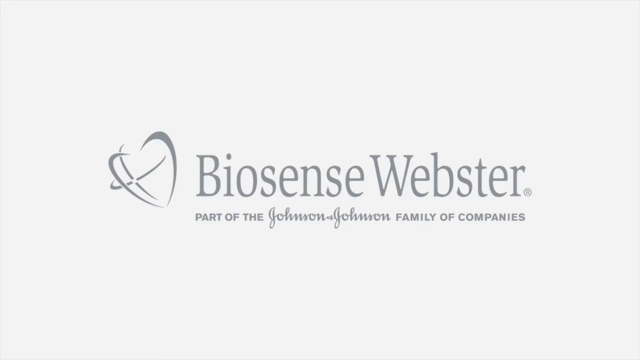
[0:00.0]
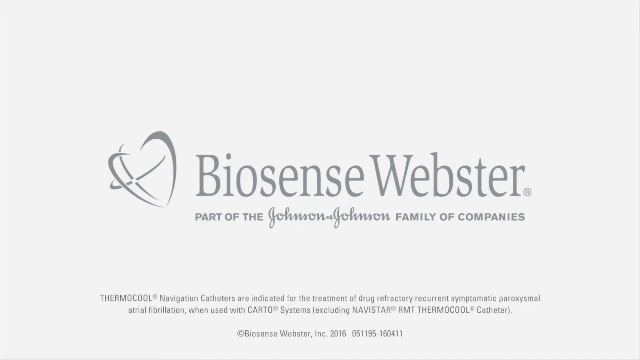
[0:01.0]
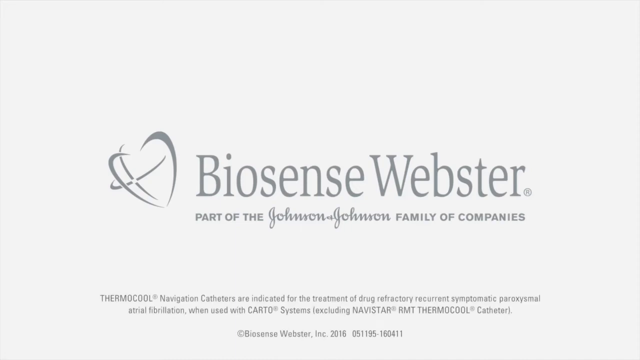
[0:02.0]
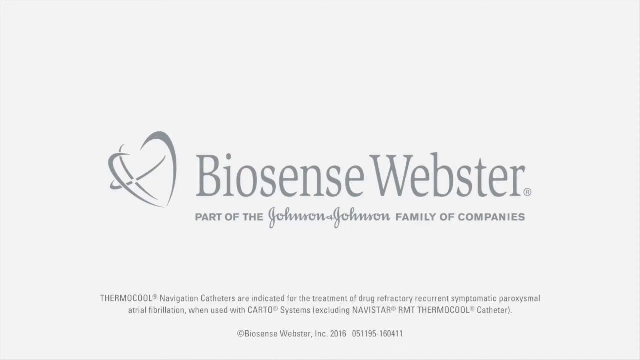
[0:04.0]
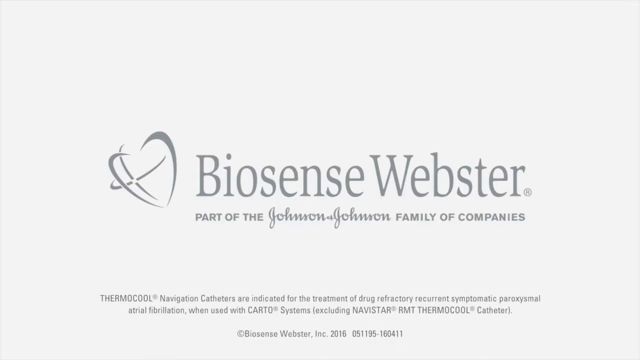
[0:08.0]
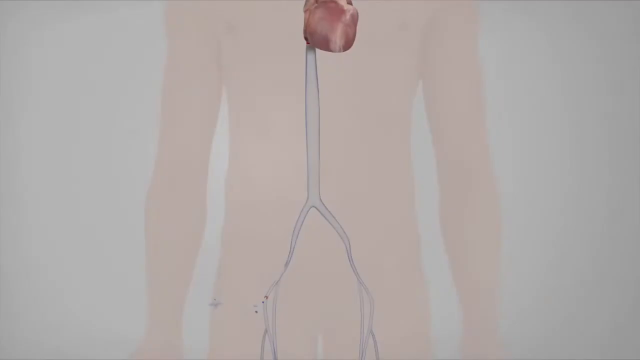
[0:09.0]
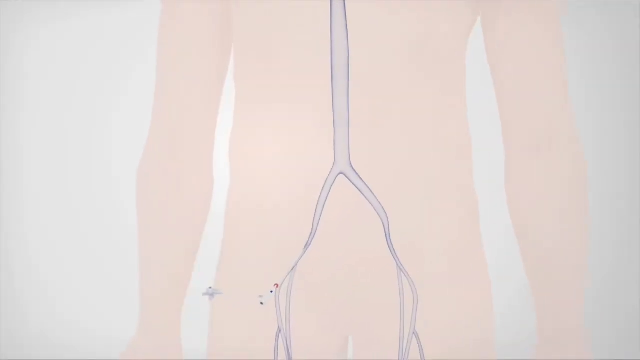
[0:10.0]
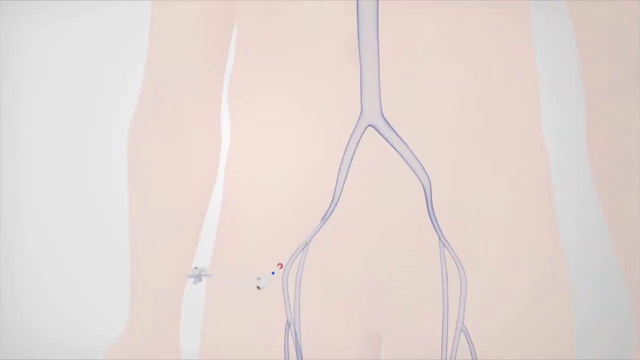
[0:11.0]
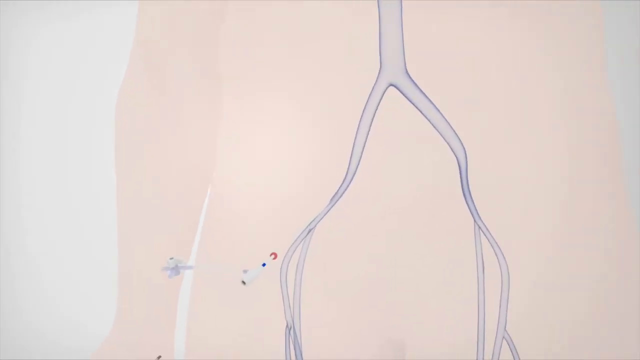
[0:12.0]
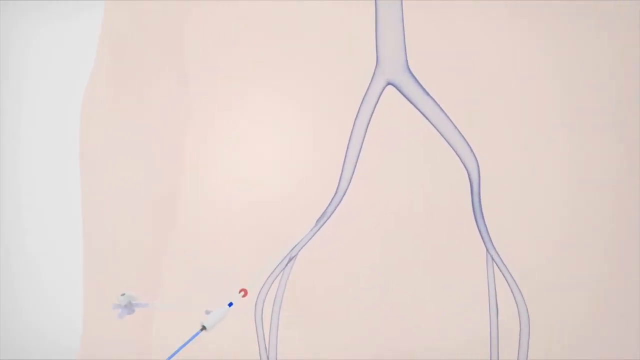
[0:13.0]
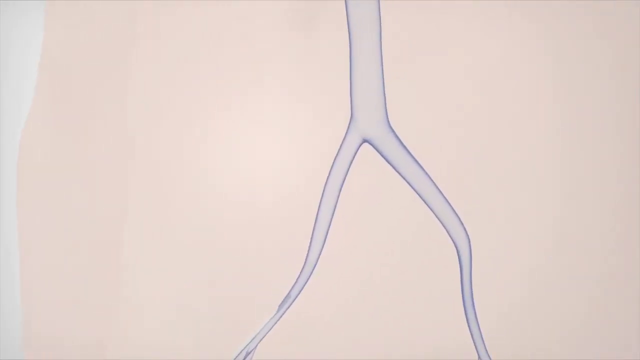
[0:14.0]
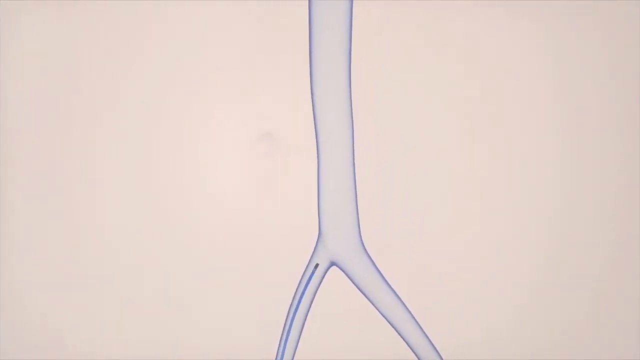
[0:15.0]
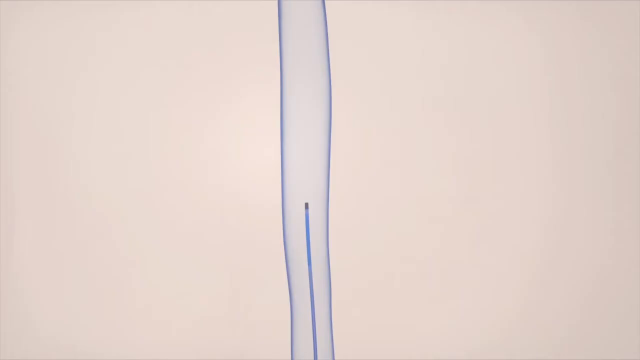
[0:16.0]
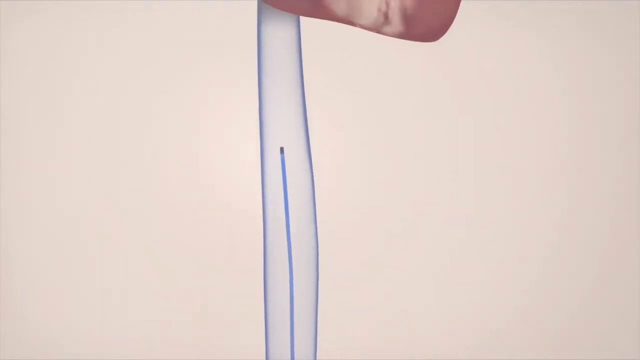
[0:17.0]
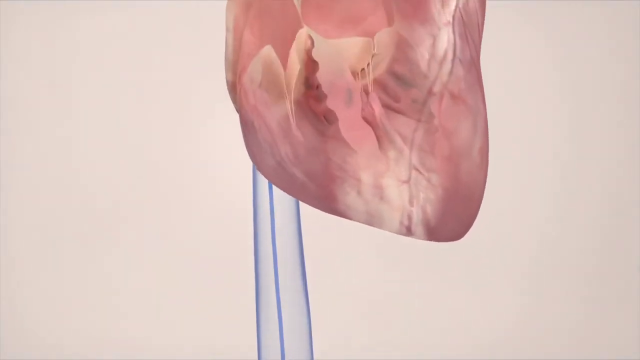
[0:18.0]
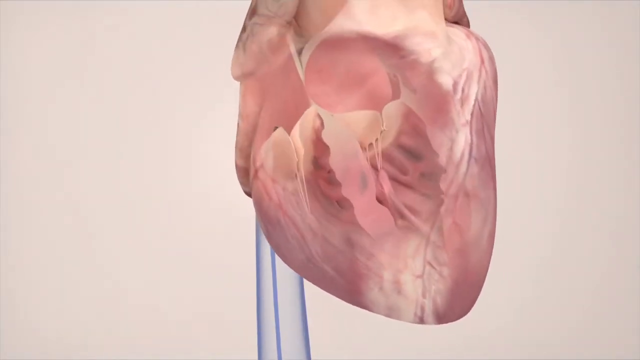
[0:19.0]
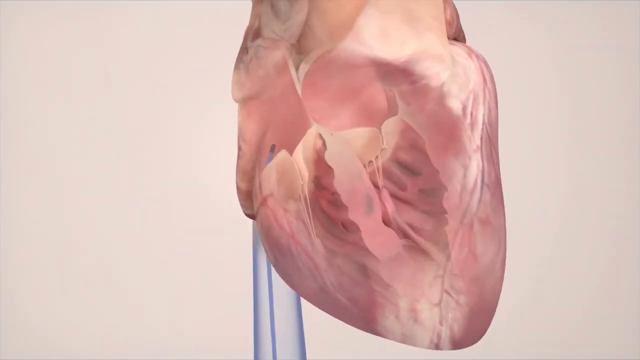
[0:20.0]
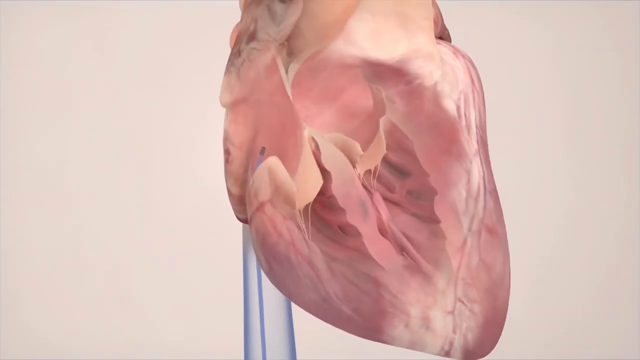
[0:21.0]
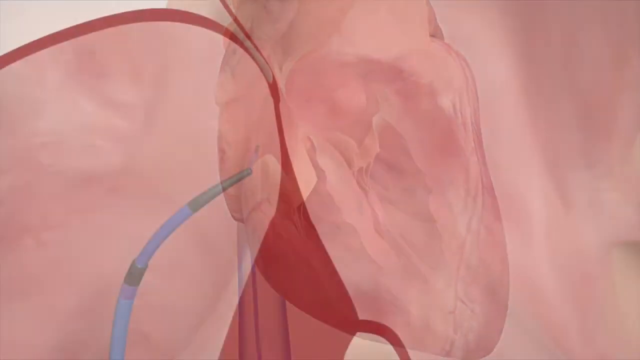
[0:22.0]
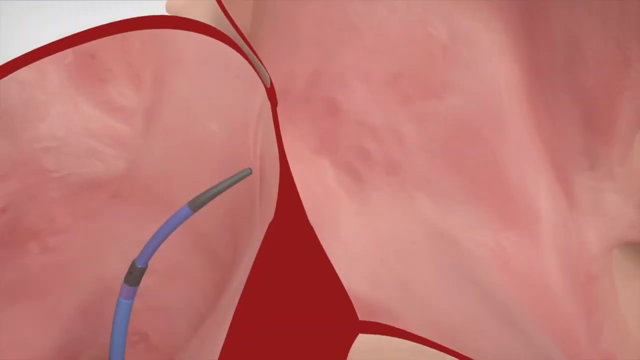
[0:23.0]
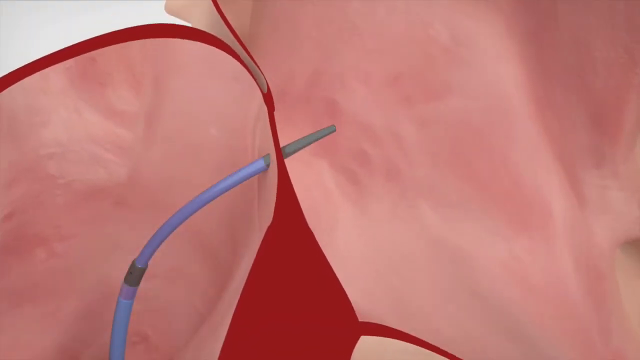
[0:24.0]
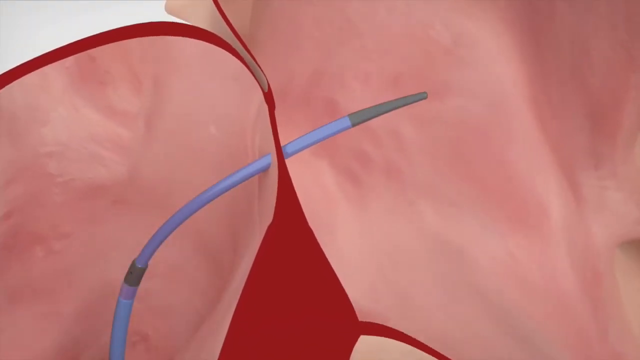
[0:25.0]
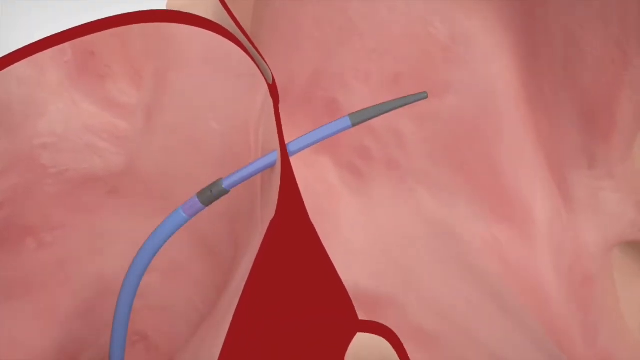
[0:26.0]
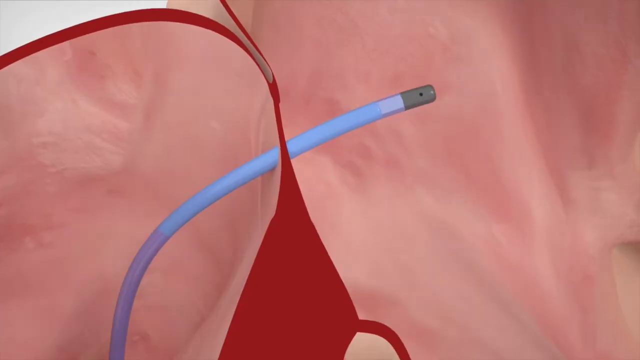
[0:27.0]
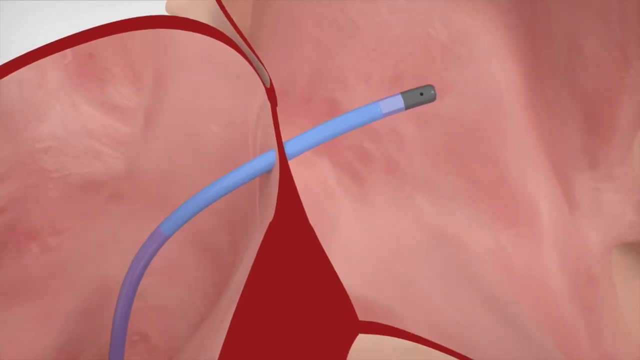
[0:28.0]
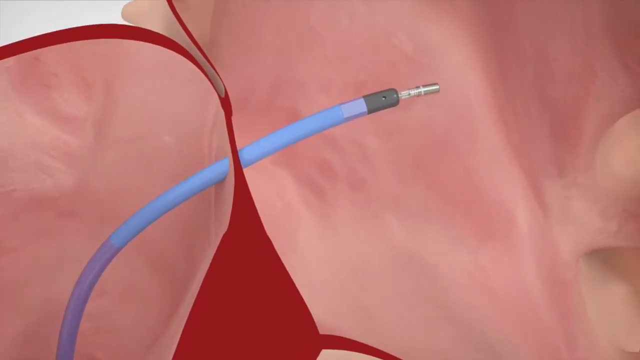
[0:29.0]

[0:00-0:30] The video shows the name Biosense Webster as part of a family of companies. There is small text at the bottom of the screen that is very hard to read. A human body is shown along with its nervous system, seemingly the central nervous system. Something is entered into the nerve, and it seems to be an operation of heart blocking or something similar.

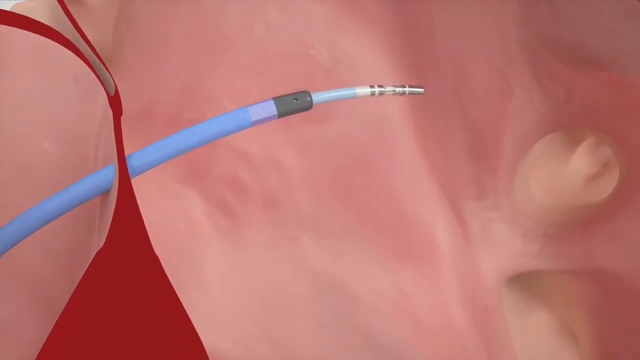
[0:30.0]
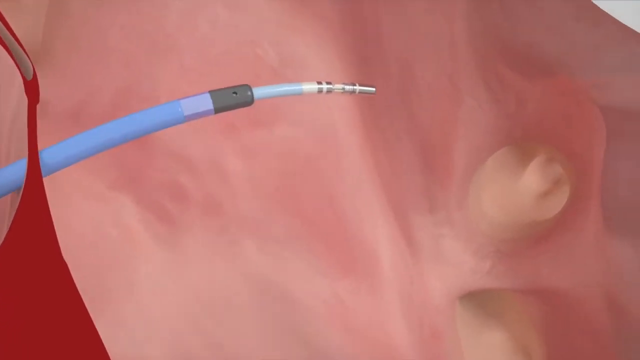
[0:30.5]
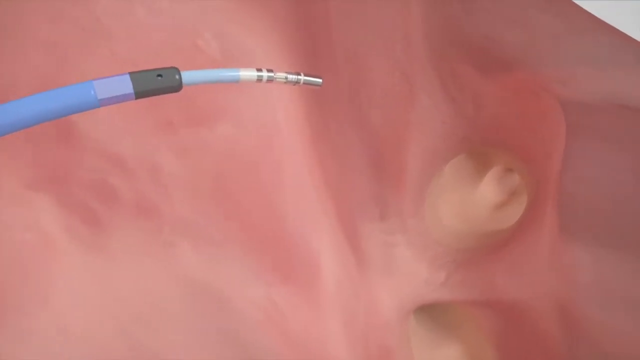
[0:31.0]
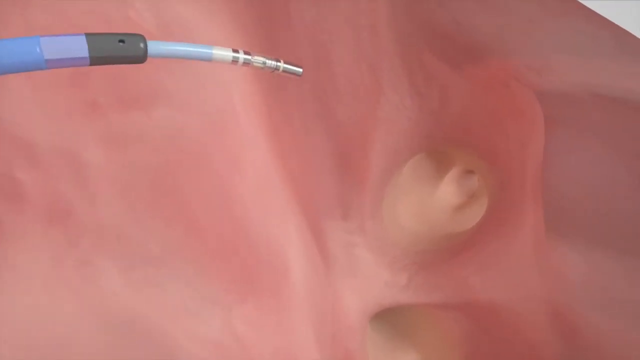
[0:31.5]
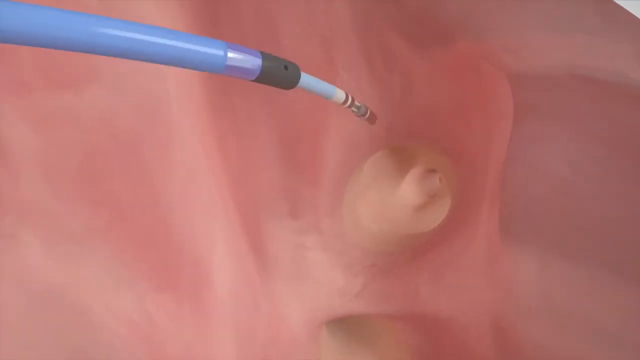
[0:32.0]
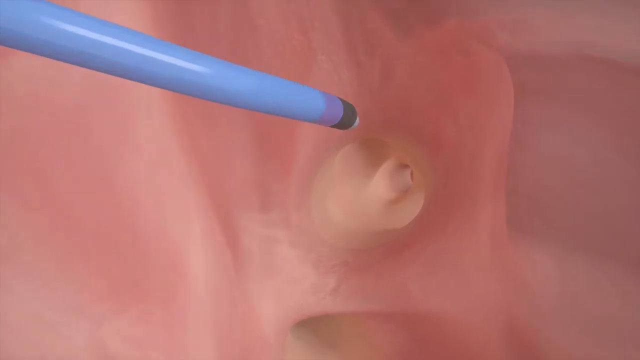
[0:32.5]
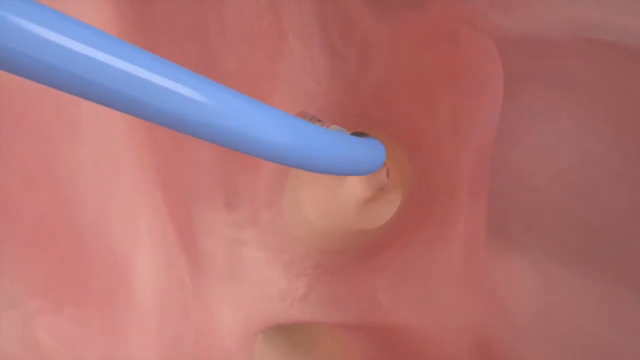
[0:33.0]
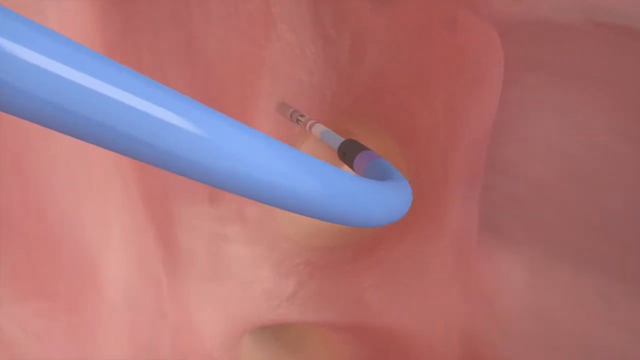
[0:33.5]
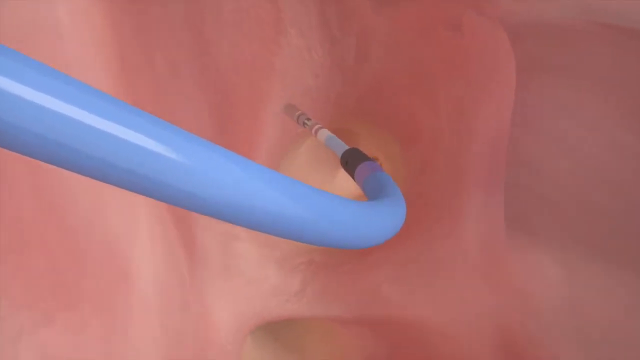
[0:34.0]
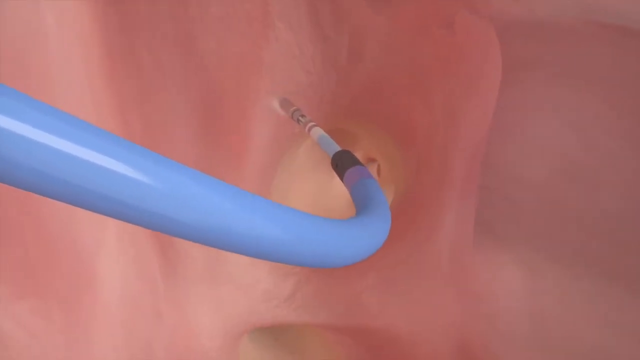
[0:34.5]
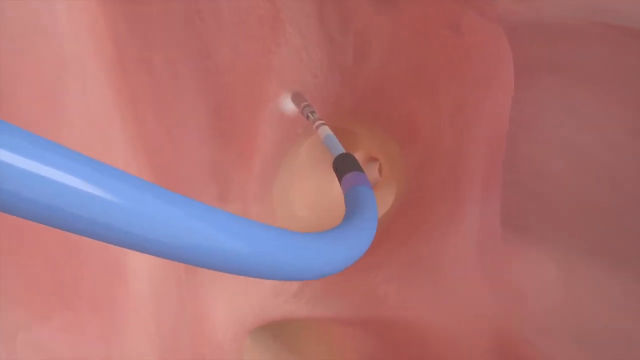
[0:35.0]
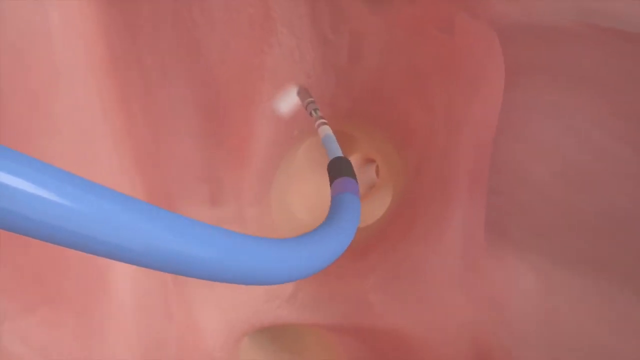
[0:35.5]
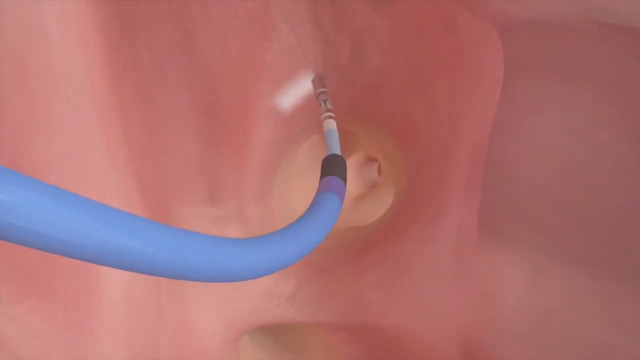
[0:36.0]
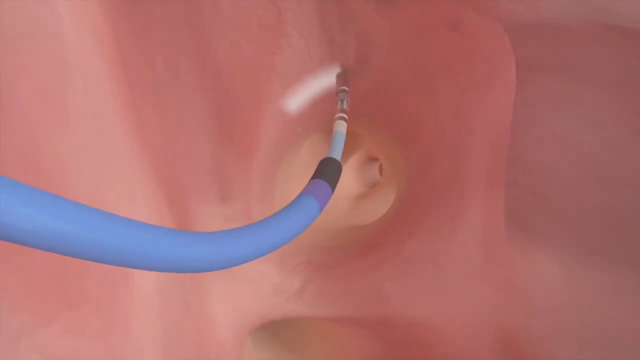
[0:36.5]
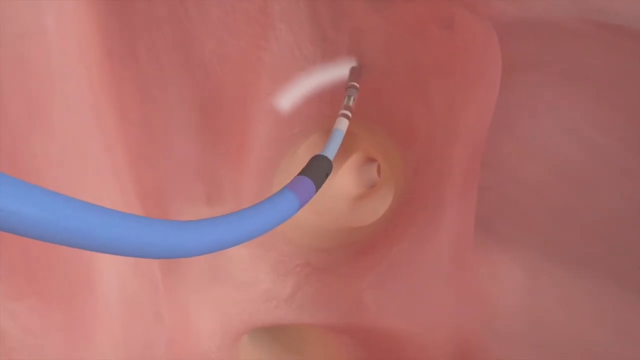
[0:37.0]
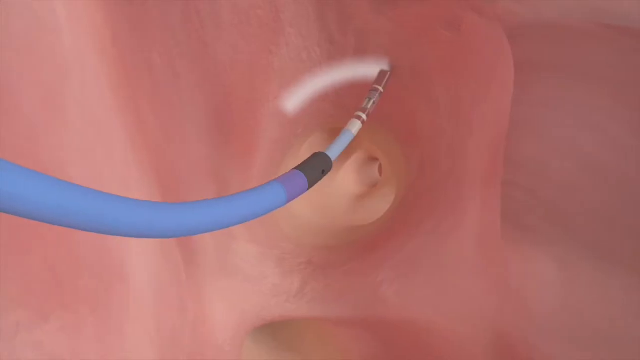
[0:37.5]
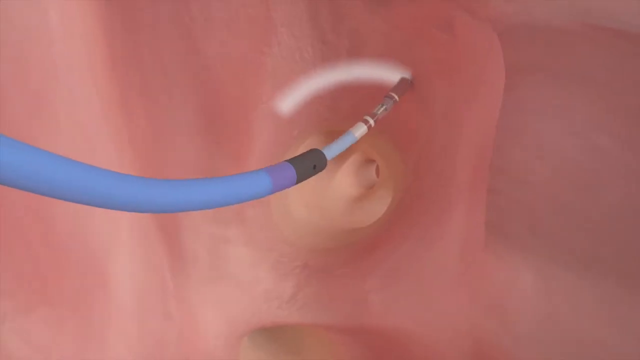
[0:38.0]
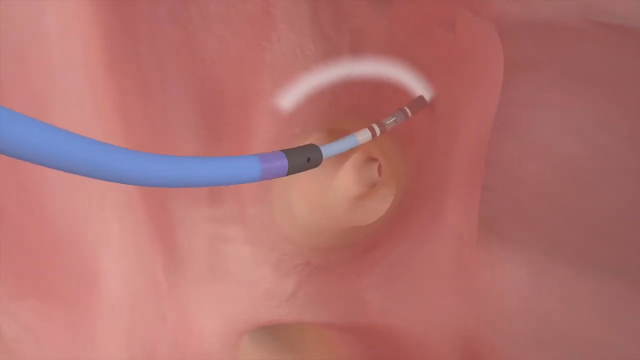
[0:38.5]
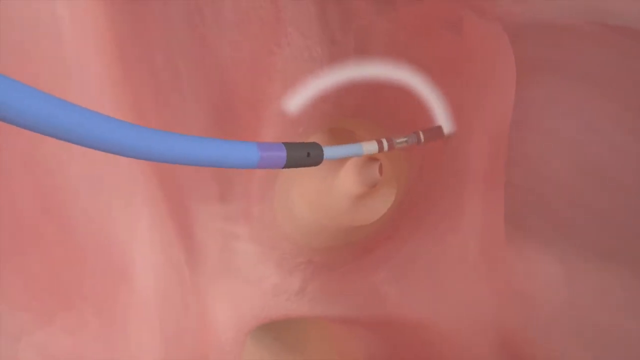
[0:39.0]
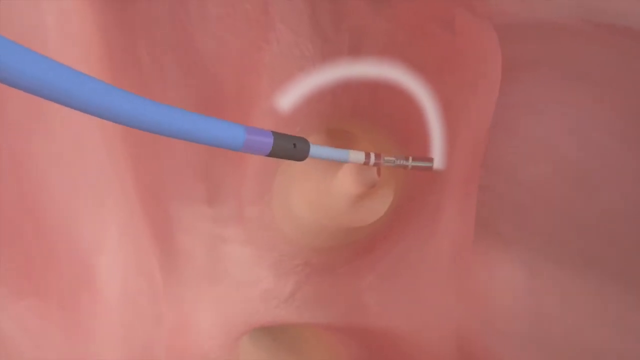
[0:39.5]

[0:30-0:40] A line, which seems to be a wire, is putting something unidentified on the heart. It seems to be doing something on the wall of the vein.